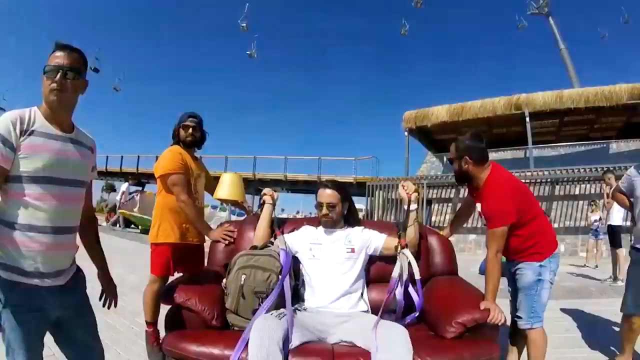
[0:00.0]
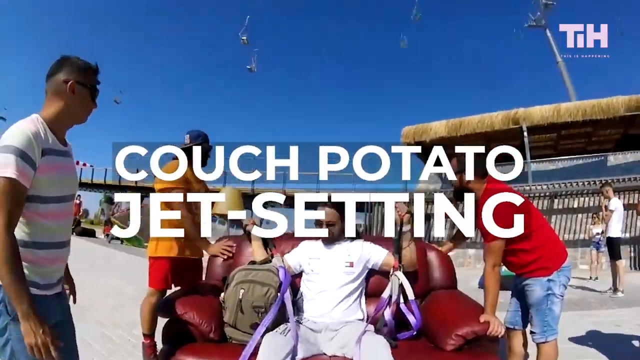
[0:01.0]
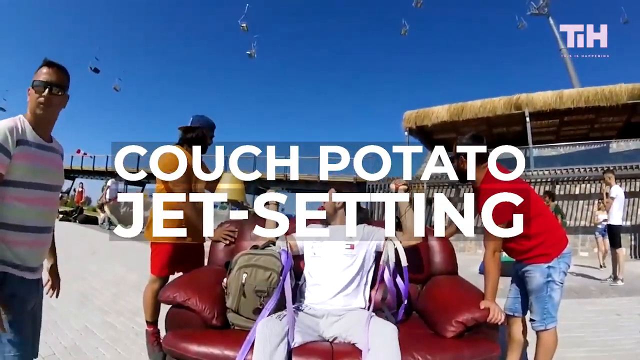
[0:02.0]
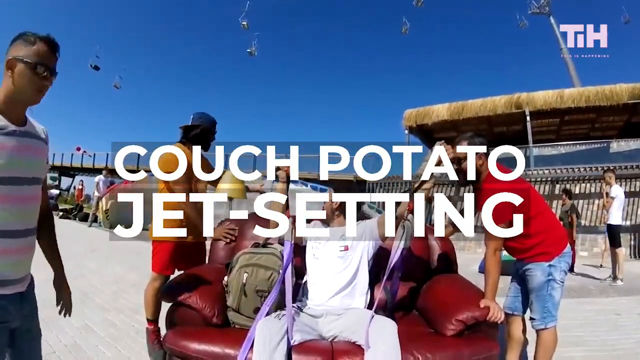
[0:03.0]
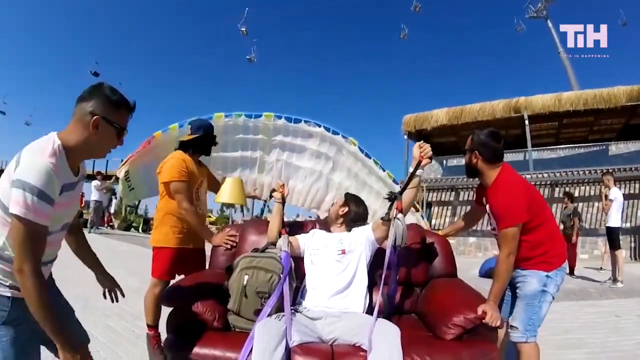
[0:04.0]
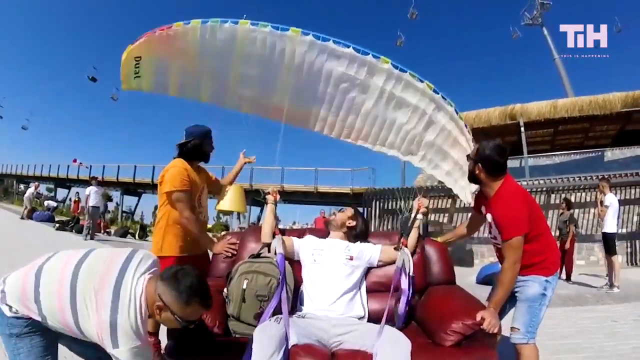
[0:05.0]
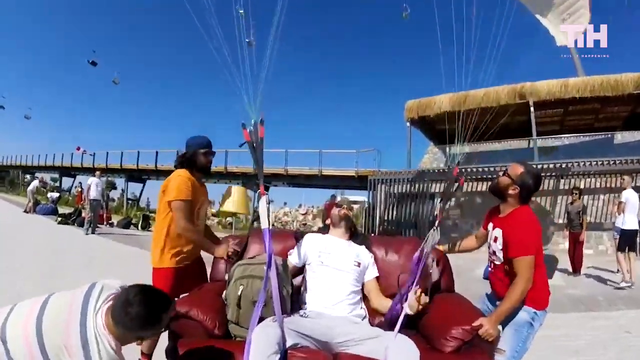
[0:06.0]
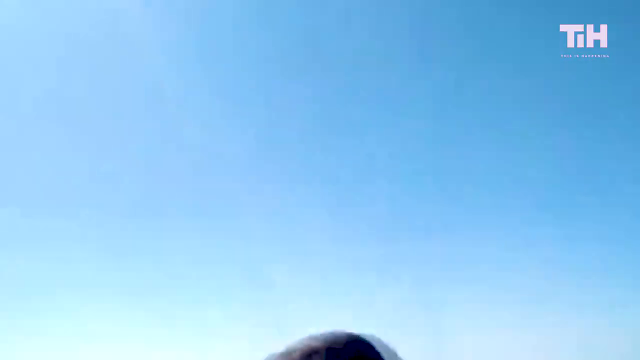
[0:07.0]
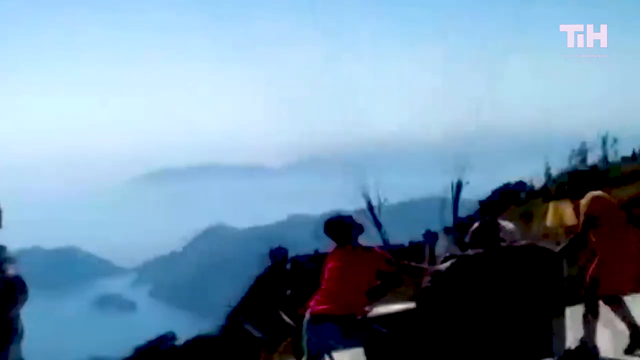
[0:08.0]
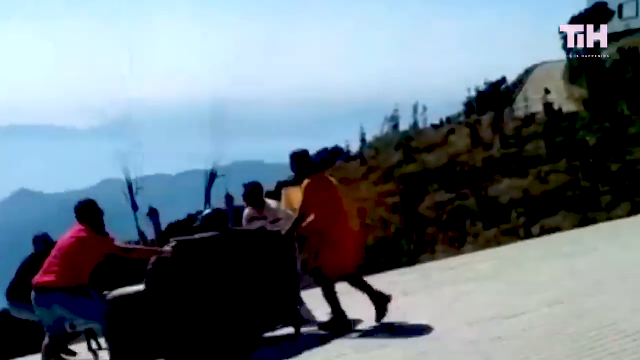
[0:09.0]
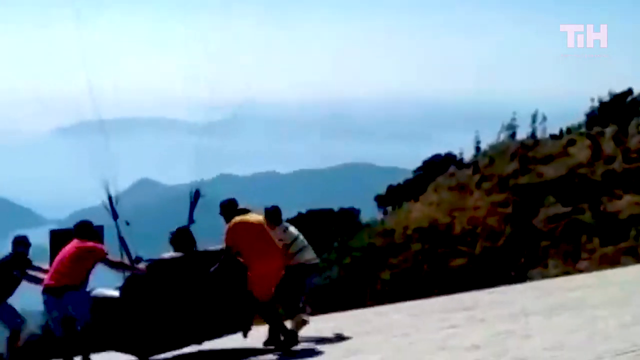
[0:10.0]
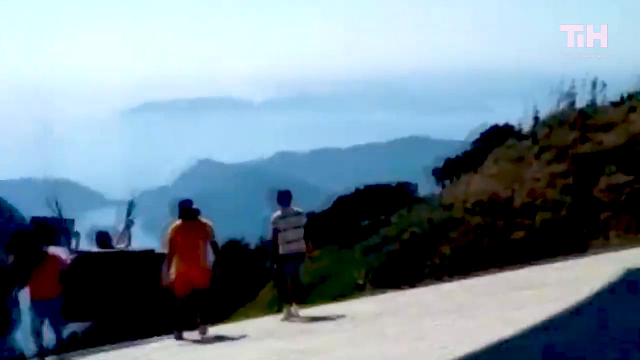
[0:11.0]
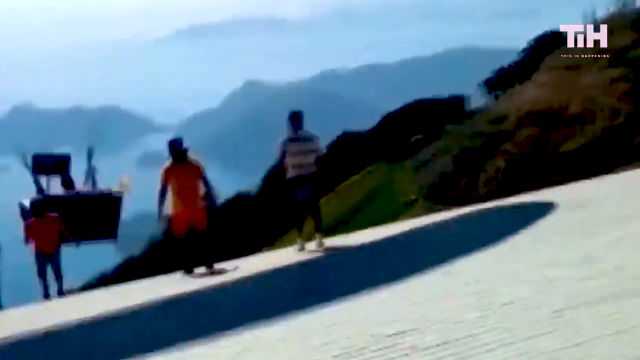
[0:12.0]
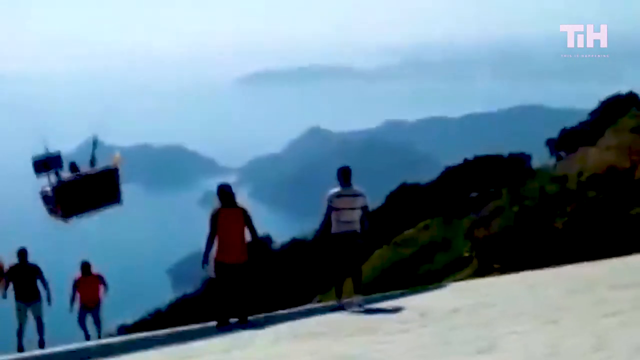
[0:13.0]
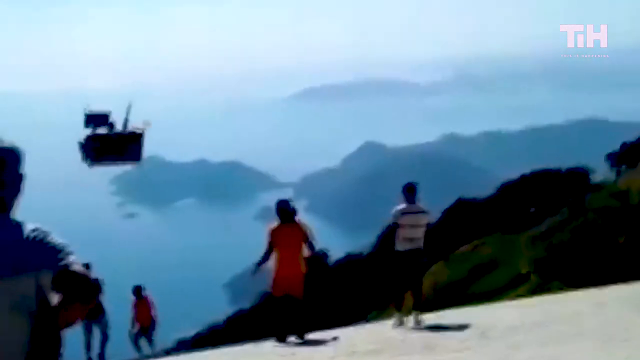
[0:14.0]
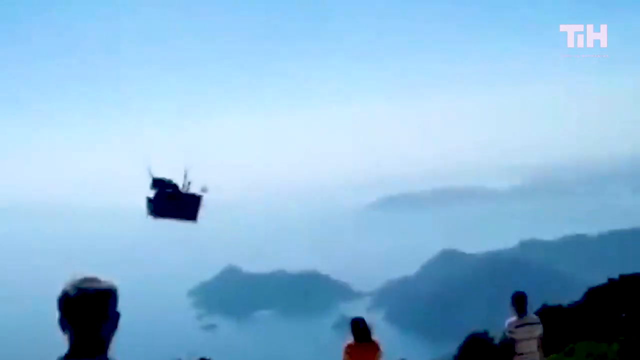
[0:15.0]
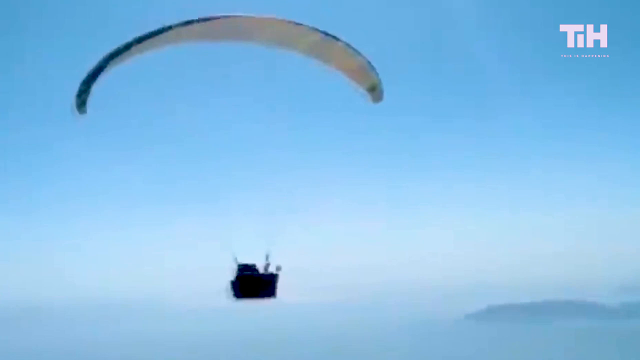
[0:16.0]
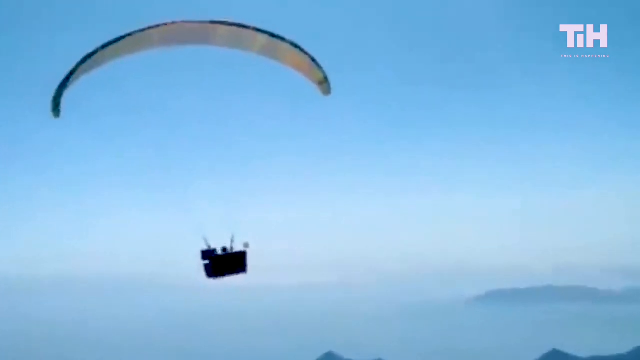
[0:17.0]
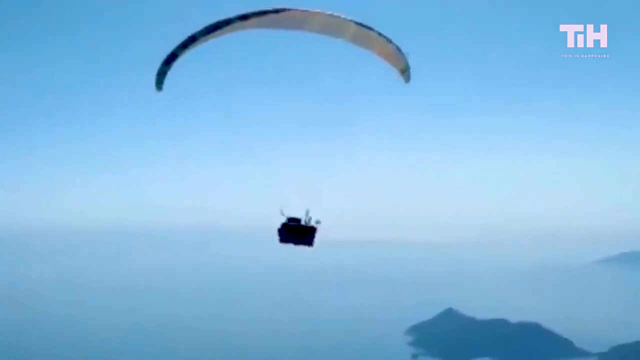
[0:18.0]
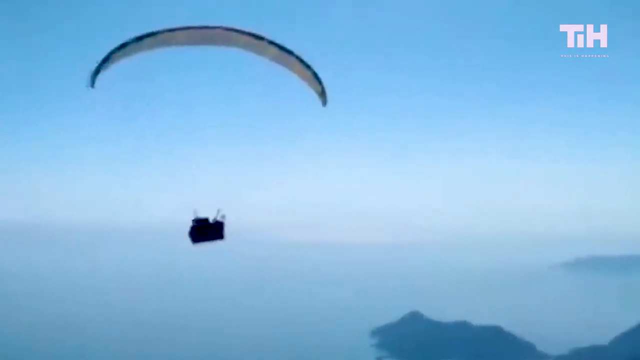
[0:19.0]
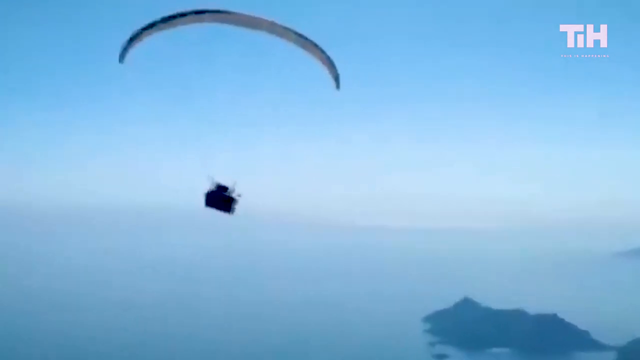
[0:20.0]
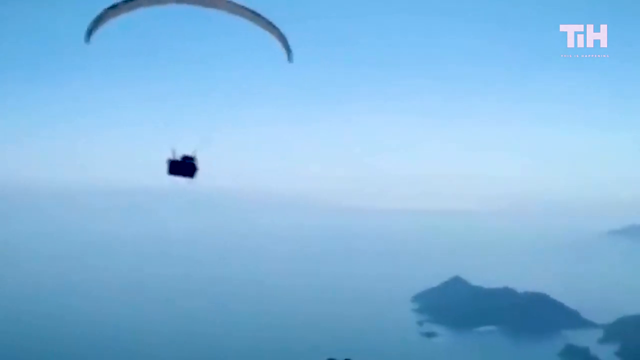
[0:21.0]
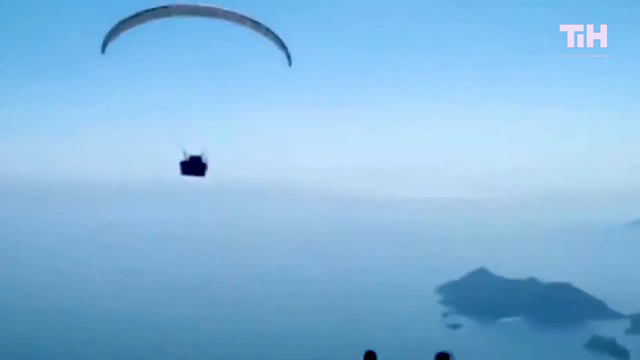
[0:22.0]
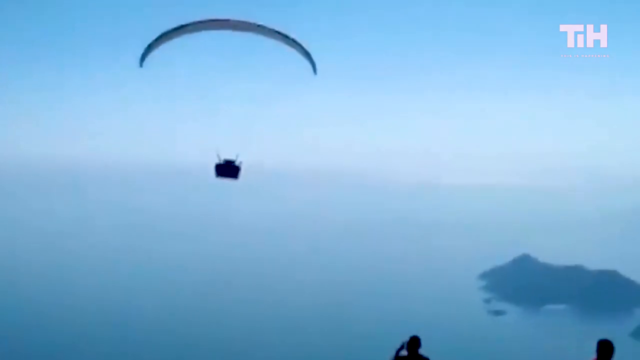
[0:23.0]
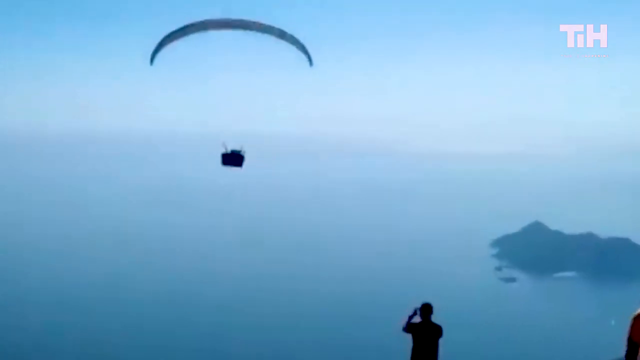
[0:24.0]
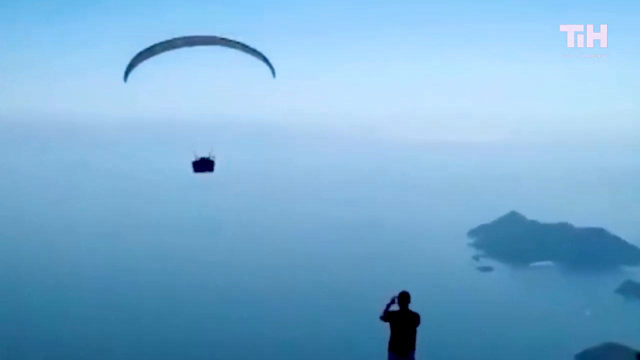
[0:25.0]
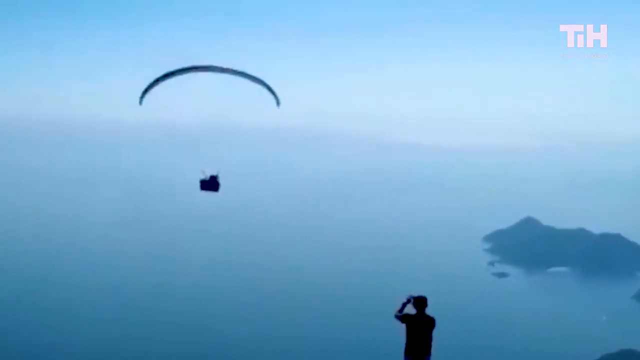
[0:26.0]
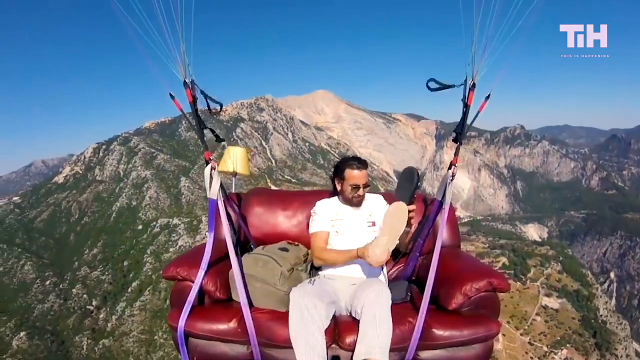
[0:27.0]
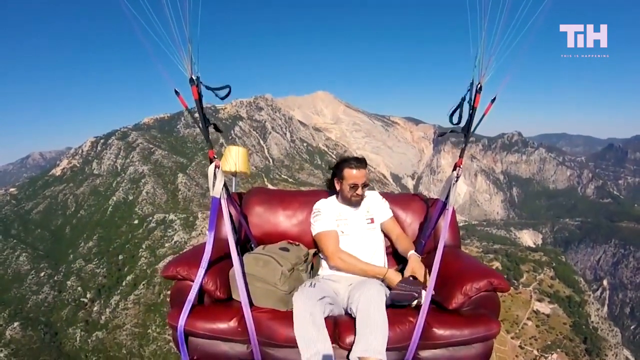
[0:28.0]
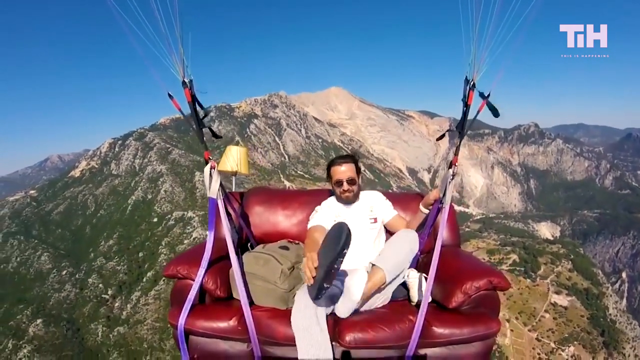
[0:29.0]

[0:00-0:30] Three men push another man, who is sitting on a couch, off a mountainside. The couch is attached to a parasail by two bungee straps. As he is pushed off, the parasail catches the wind and the couch and the man take flight, the couch wobbling back and forth as it does. The men take pictures and record as he flies through the air on the couch, which is more the size of a love seat. Of the three men who helped push the couch, one wears a white shirt with gray and pink stripes, a second wears an orange t-shirt, and a third wears a red shirt. The parasail carries the couch and the man off the mountainside and over the water.